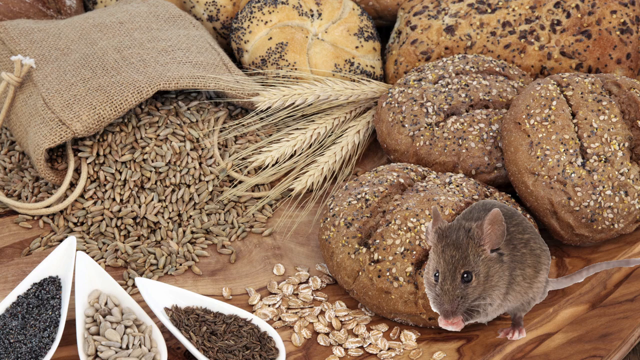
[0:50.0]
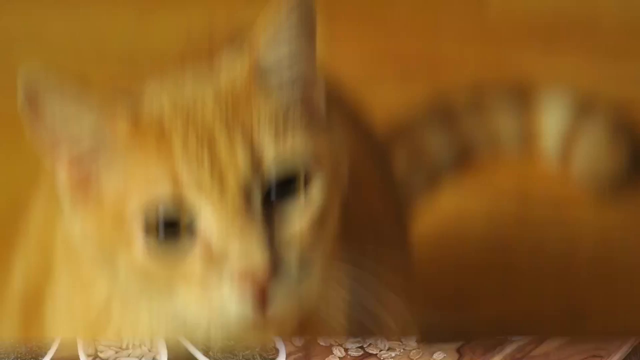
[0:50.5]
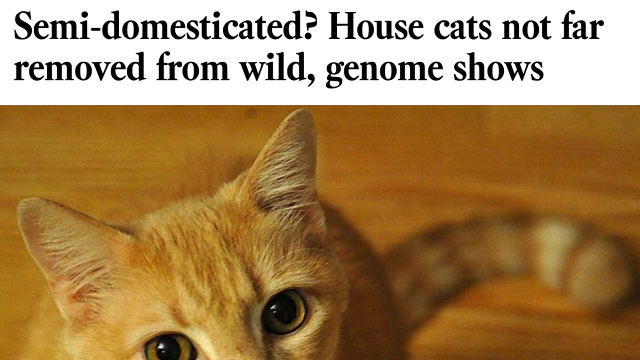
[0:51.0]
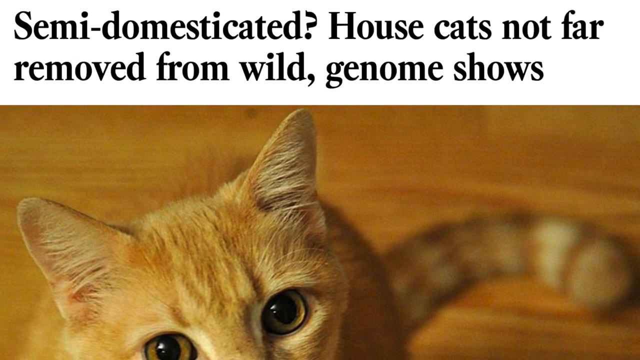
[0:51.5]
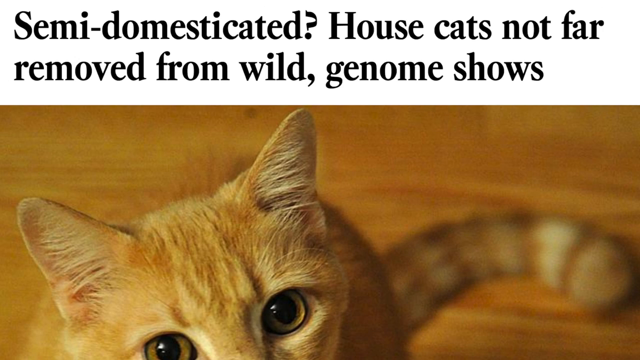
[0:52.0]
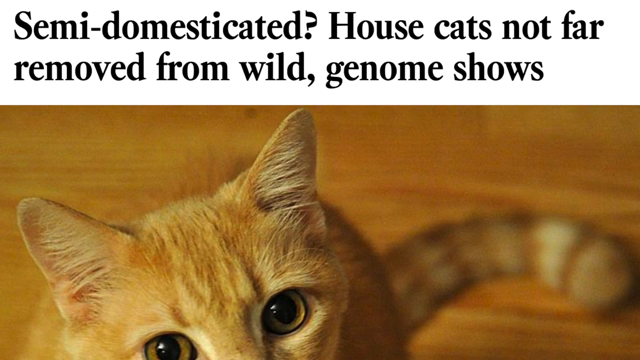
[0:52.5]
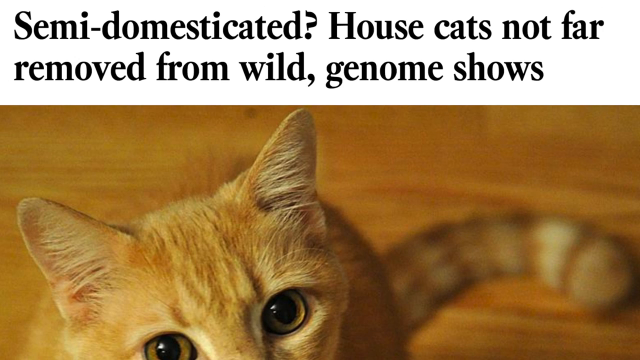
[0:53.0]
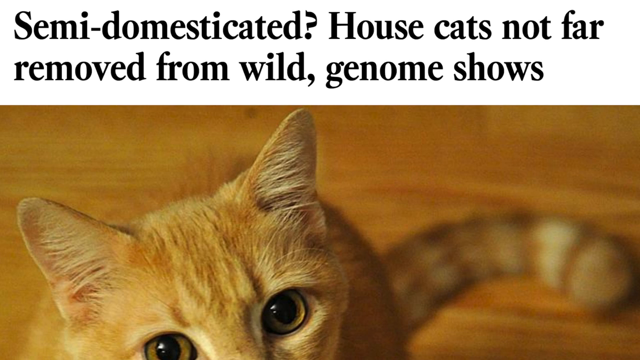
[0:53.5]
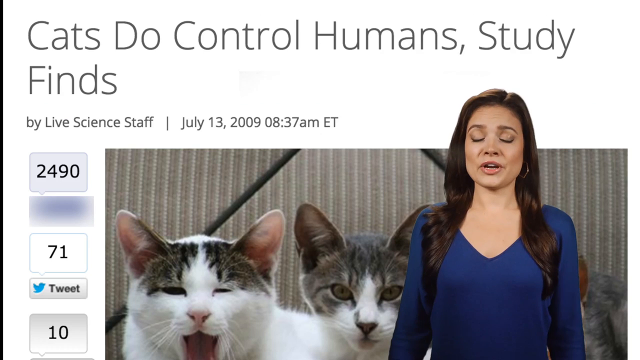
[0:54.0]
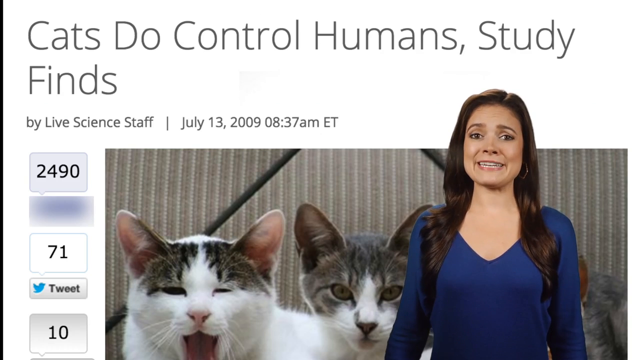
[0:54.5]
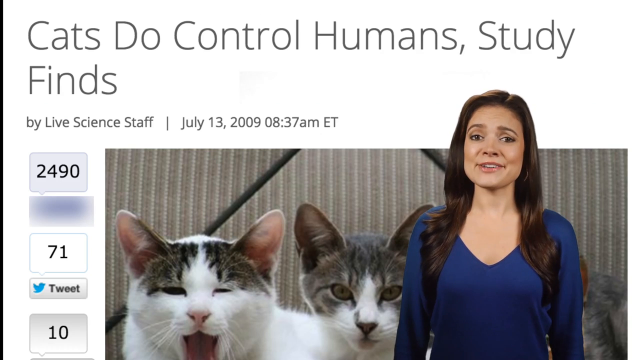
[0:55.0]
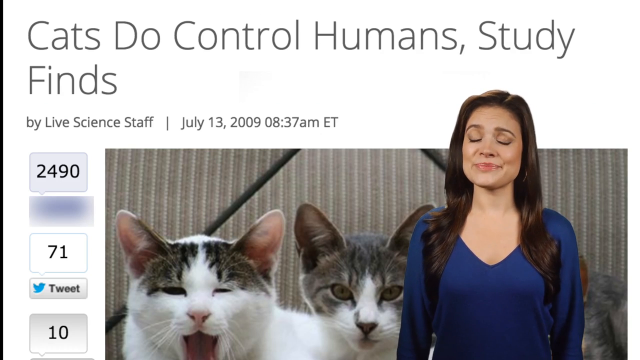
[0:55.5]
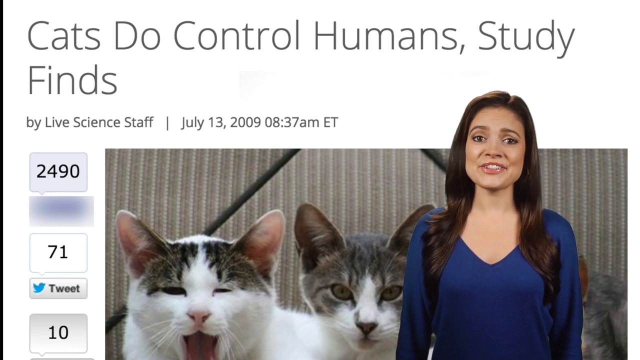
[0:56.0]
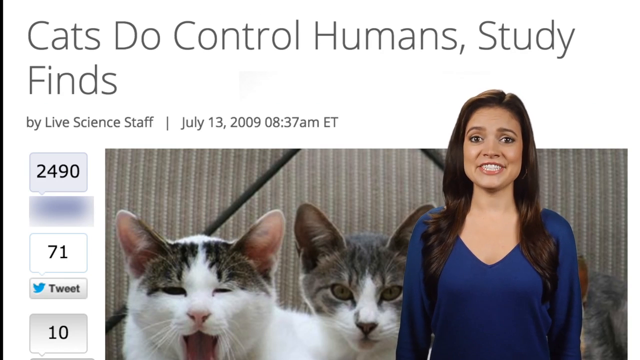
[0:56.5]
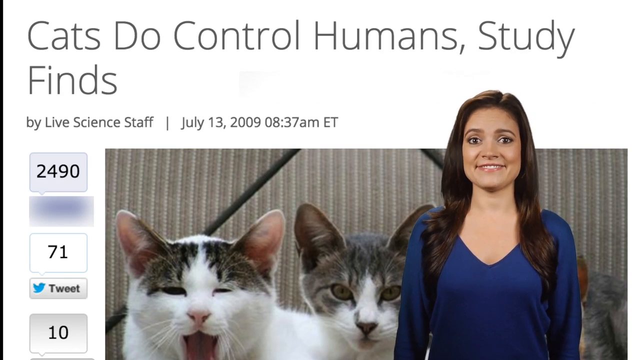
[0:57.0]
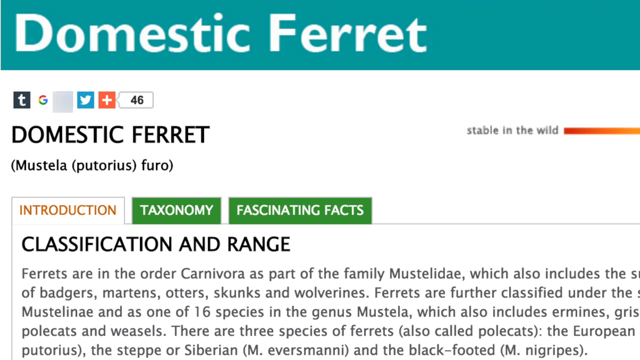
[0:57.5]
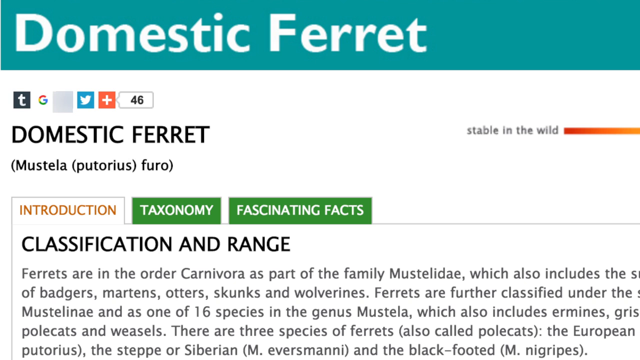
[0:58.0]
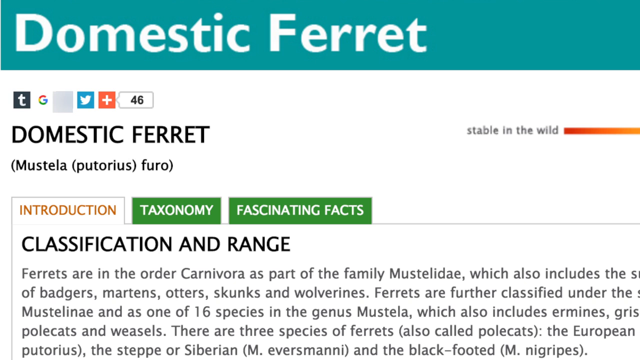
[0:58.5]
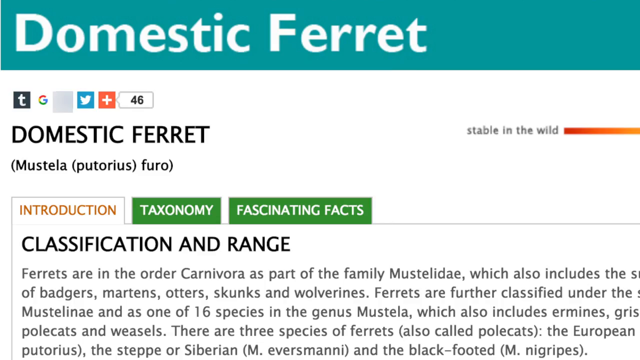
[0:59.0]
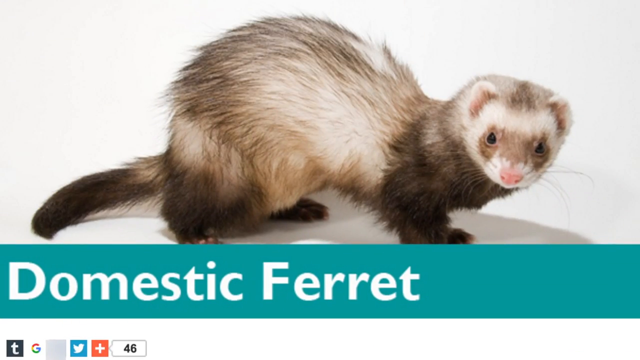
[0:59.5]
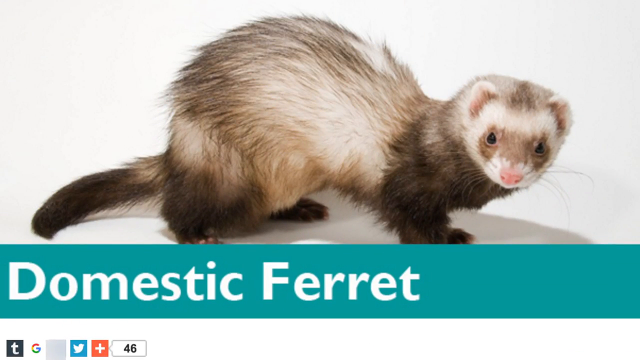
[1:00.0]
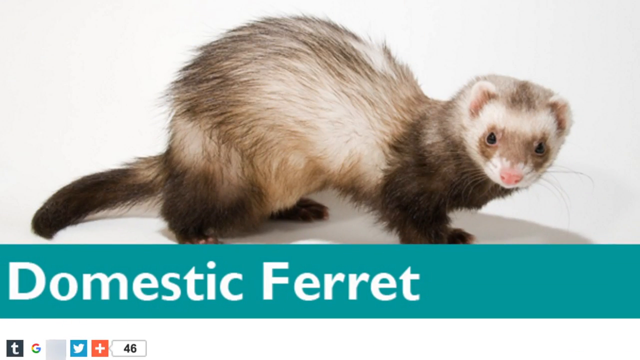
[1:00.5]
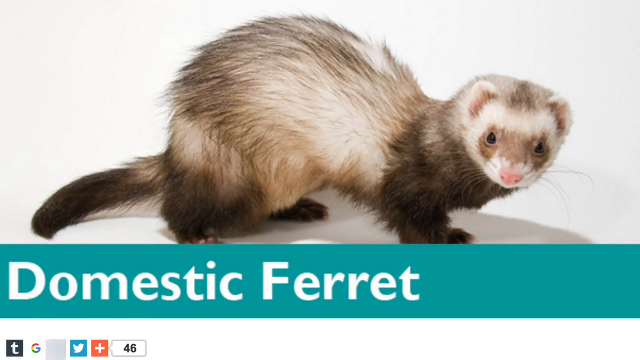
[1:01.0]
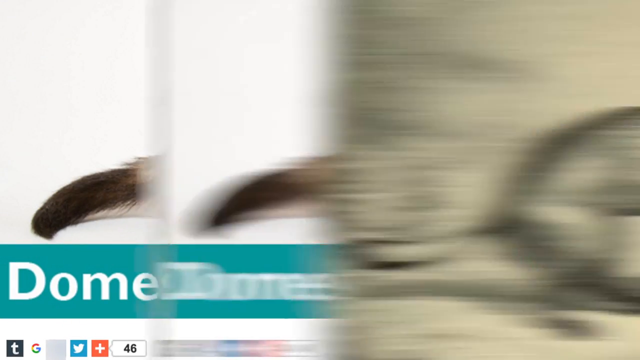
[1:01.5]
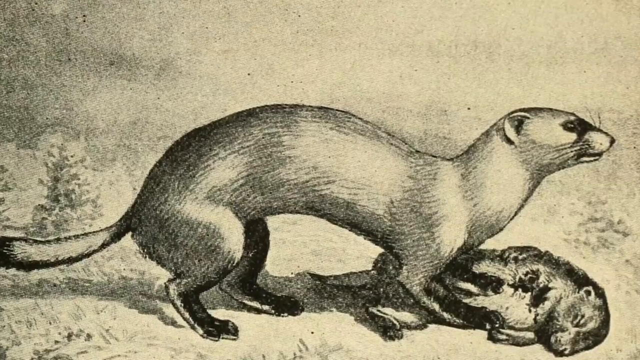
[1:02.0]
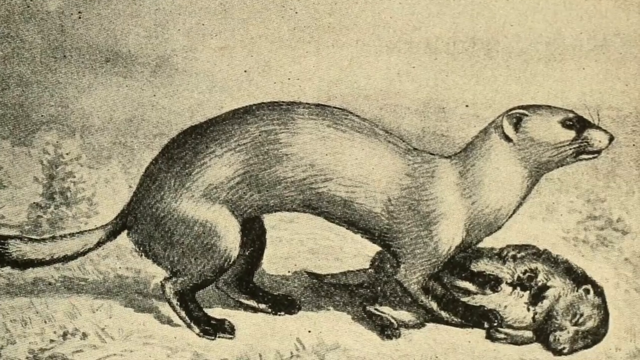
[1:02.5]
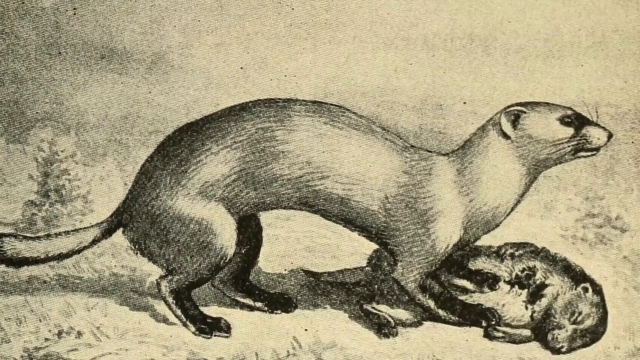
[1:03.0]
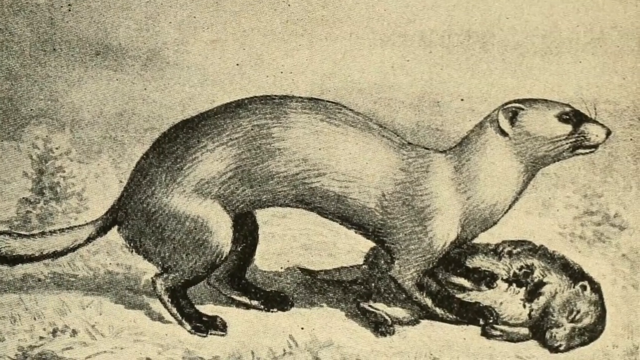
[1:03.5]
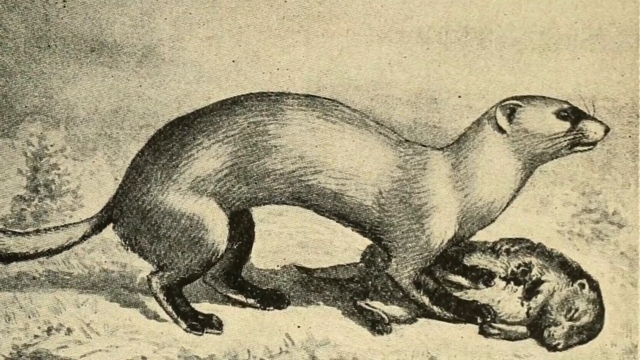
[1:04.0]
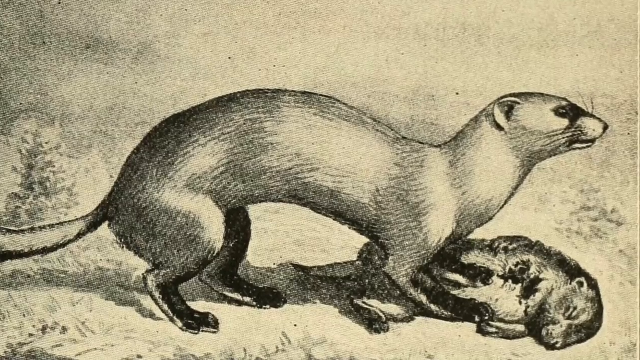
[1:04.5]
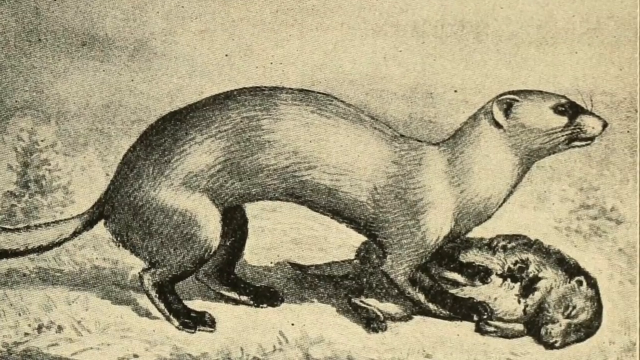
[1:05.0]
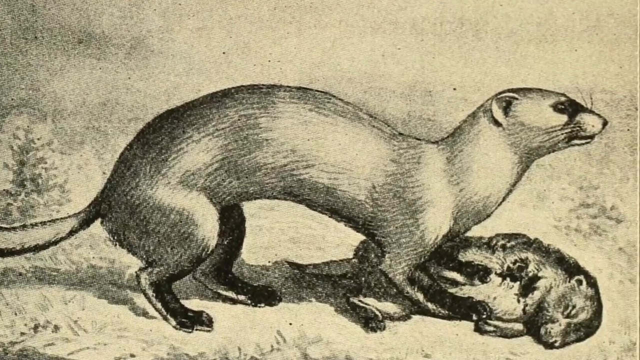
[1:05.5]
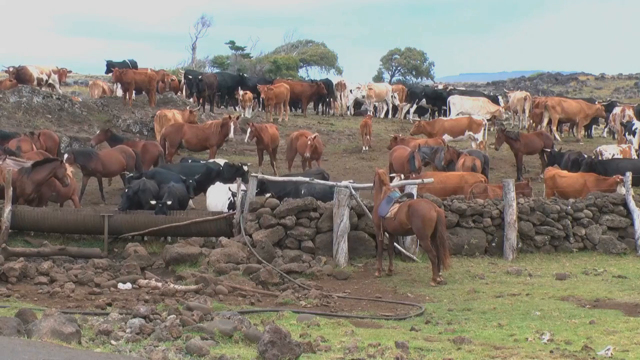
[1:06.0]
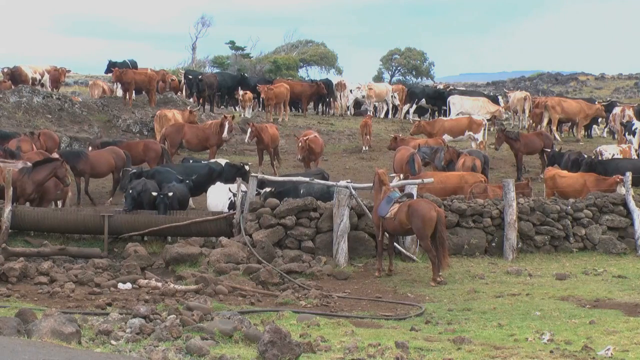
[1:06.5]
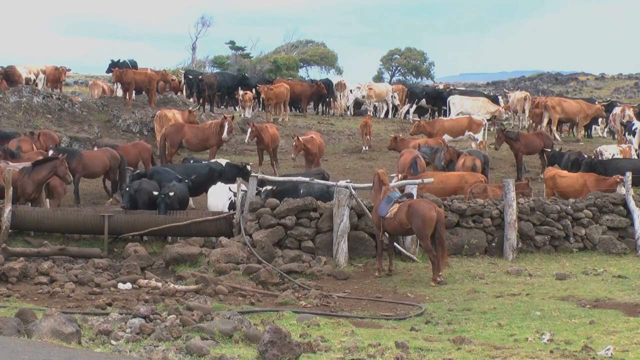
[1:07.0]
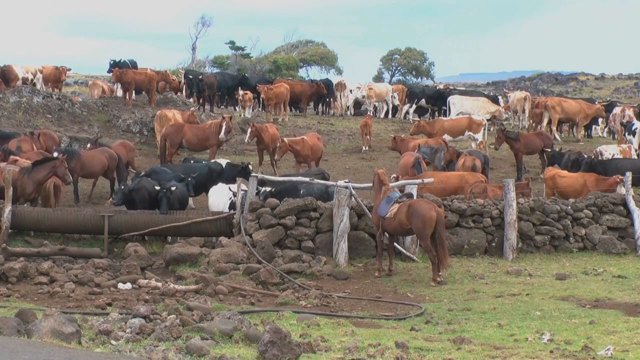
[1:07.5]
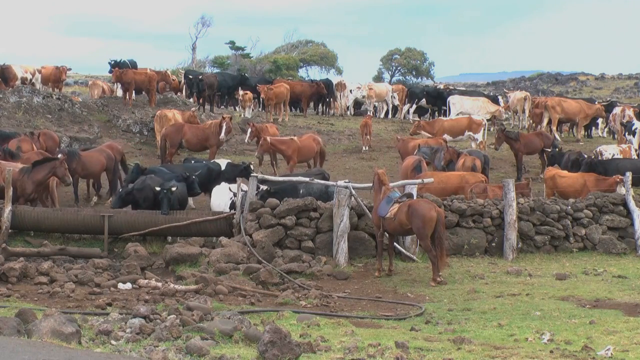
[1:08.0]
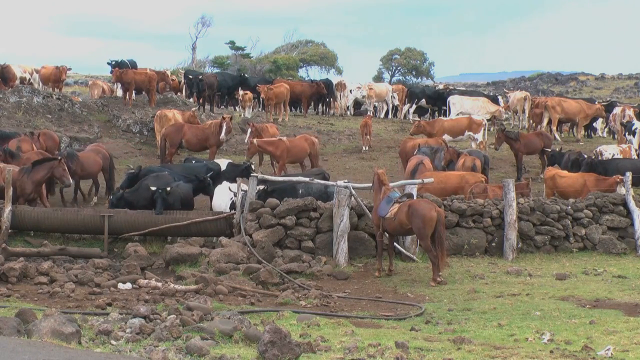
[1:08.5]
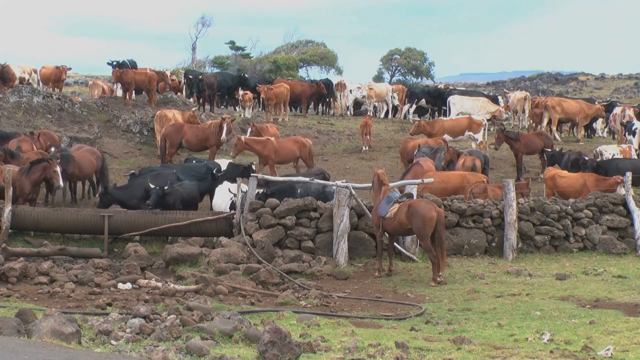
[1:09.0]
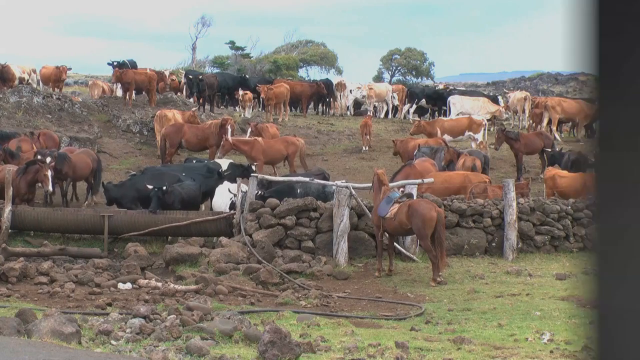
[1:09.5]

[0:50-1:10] A picture shows some bread and wheat on a table, and a cutout picture of a small mouse appears in the corner of the screen. The video changes to another website screenshot titled "semi-domesticated, house cats not far removed from wild, genome shows", with parts of a photo of an orange cat underneath. Next, a new screenshot appears overlaid with the video of the lady talking to the camera; it is another website screenshot titled "Cats do control humans. Study finds", with a picture of some cats underneath. Once again a new website screenshot appears, and this time the lady disappears. It is titled "Domestic ferret" and has a picture of a ferret. It then changes to a drawing of a ferret that looks very old. Then comes a shot of the countryside, where the field is full to the brim with horses roaming around.